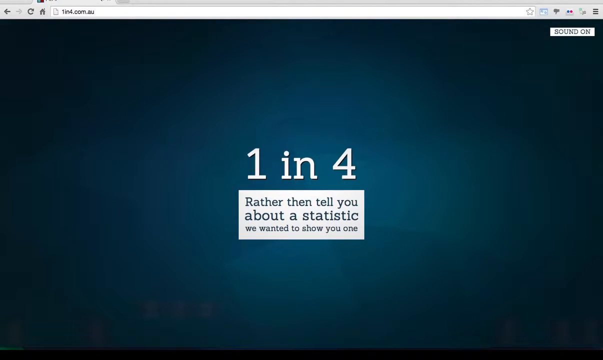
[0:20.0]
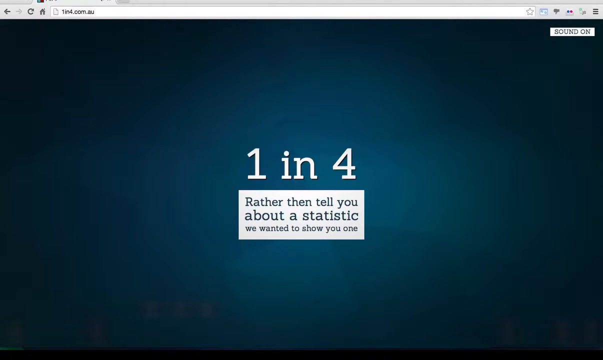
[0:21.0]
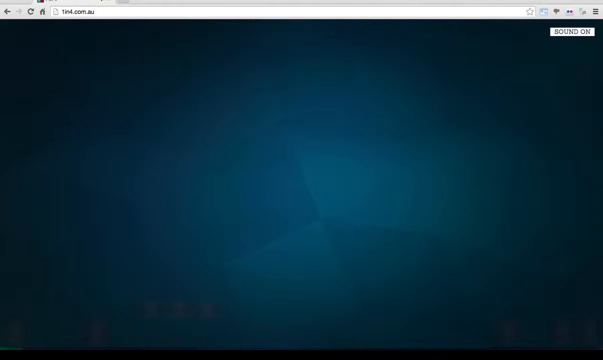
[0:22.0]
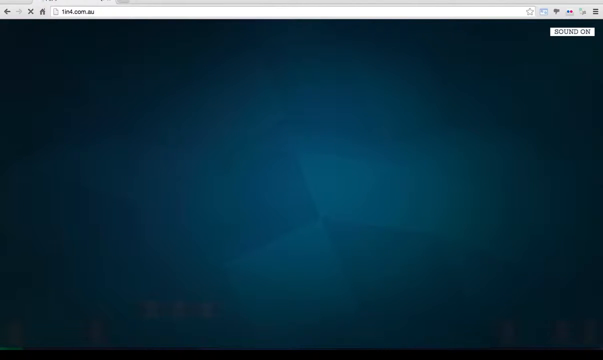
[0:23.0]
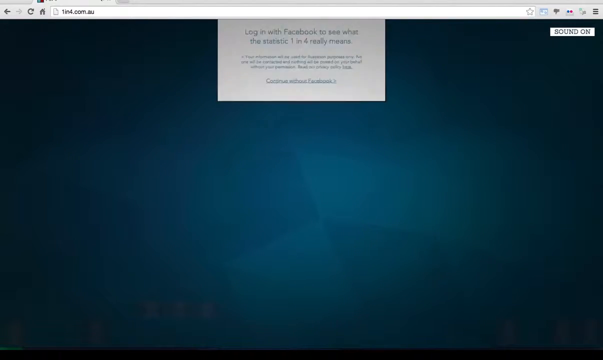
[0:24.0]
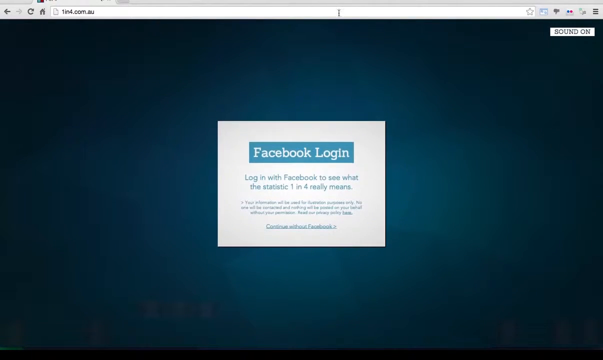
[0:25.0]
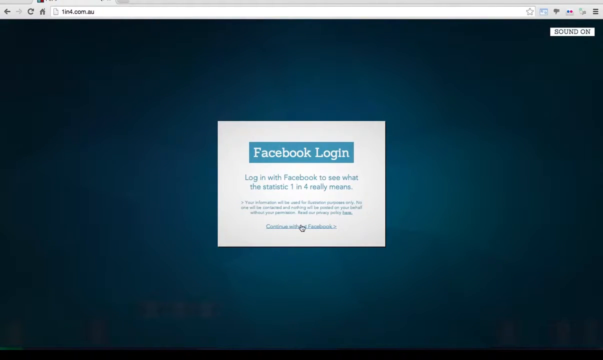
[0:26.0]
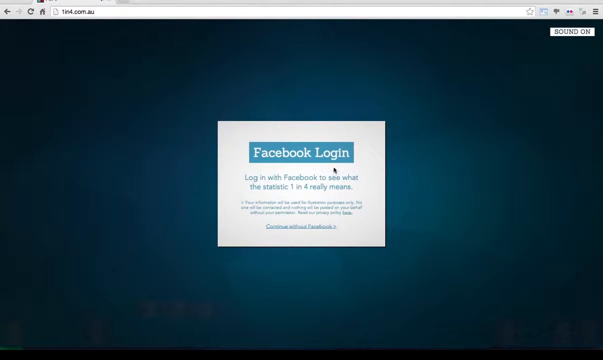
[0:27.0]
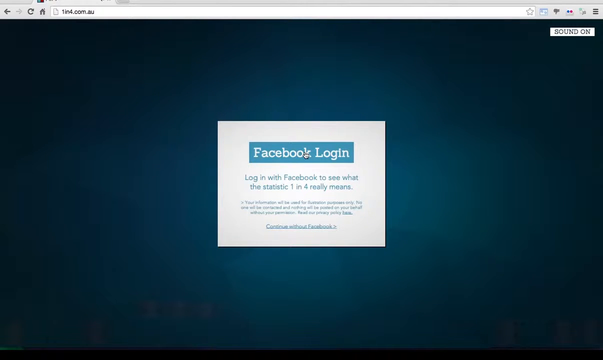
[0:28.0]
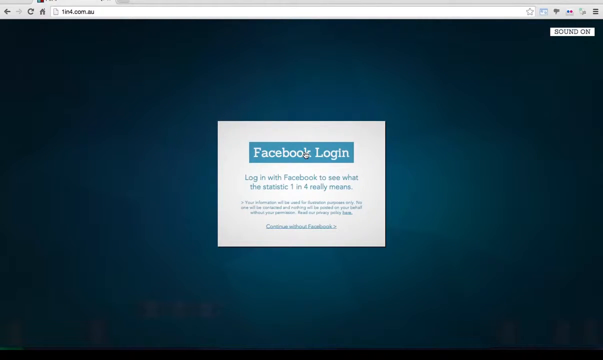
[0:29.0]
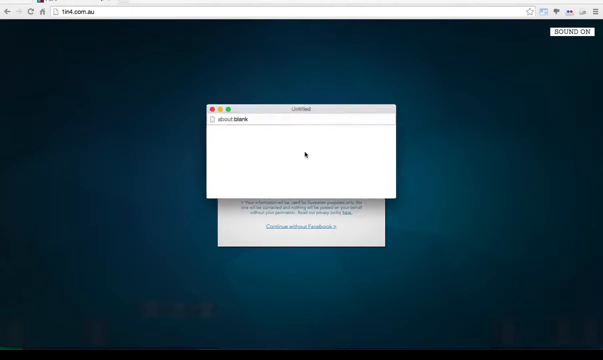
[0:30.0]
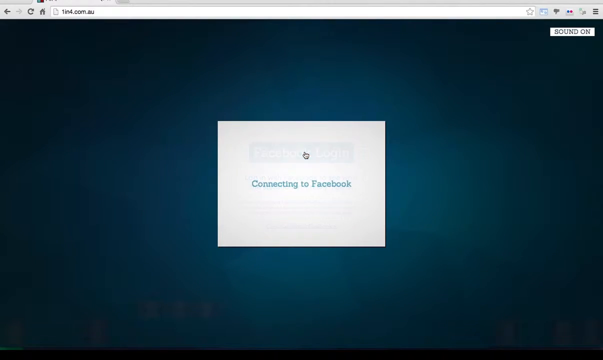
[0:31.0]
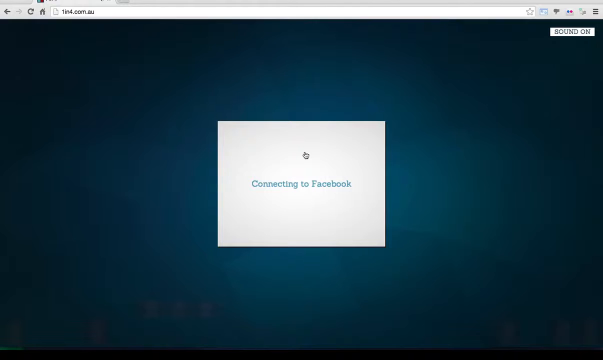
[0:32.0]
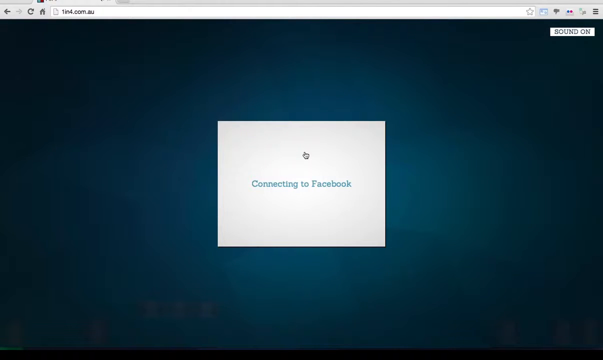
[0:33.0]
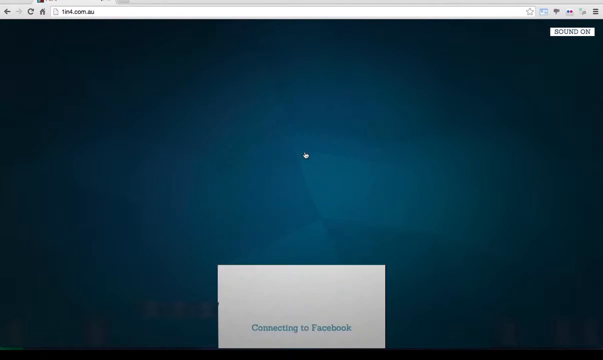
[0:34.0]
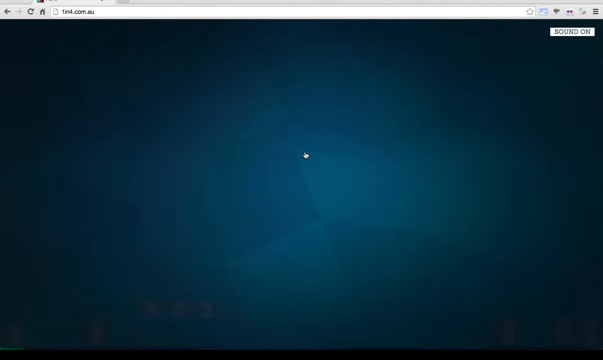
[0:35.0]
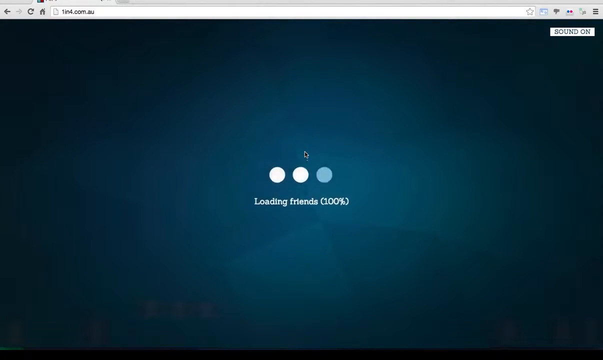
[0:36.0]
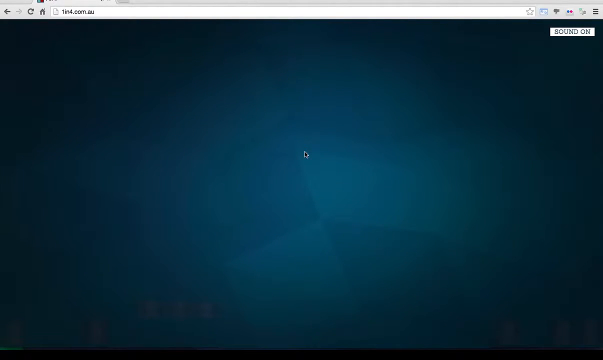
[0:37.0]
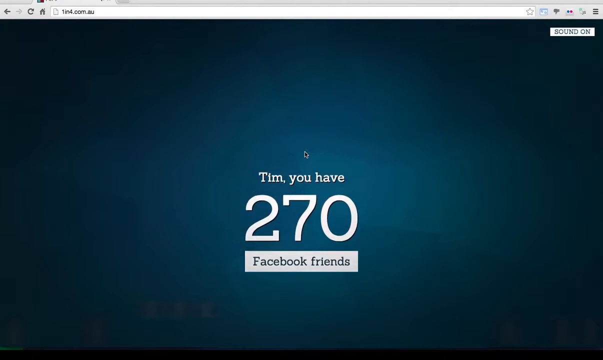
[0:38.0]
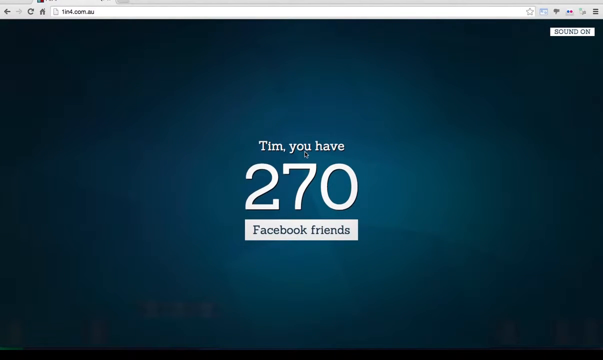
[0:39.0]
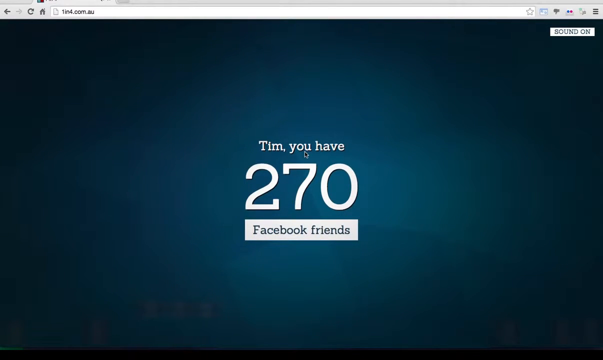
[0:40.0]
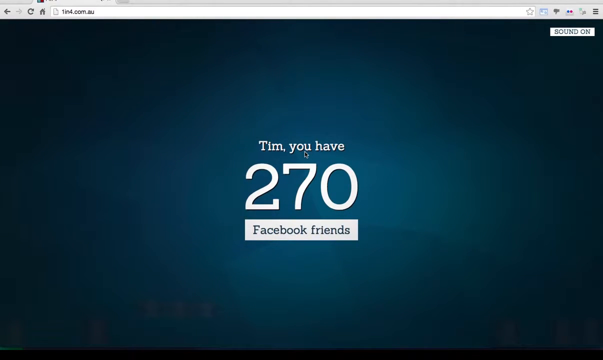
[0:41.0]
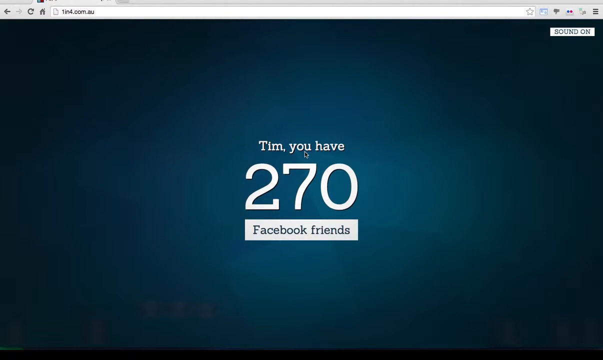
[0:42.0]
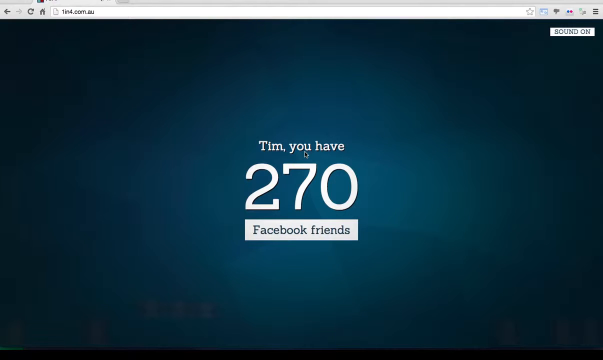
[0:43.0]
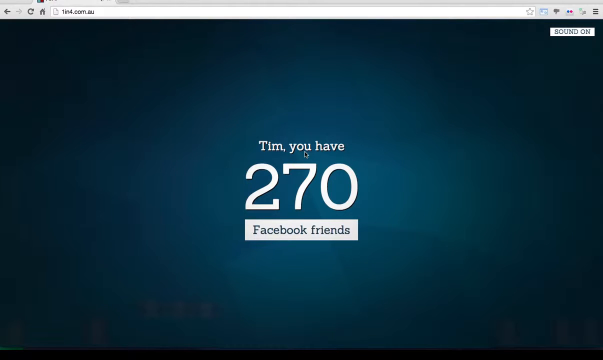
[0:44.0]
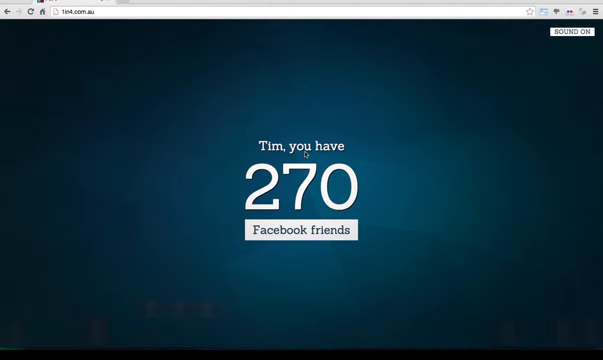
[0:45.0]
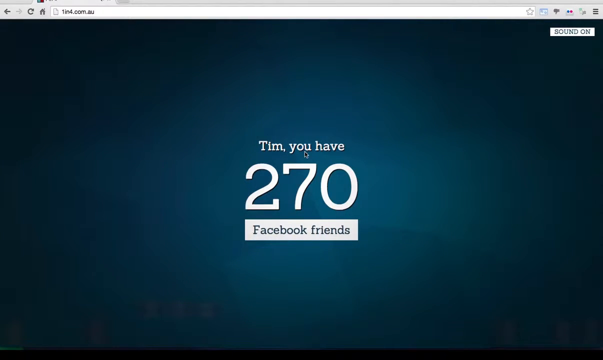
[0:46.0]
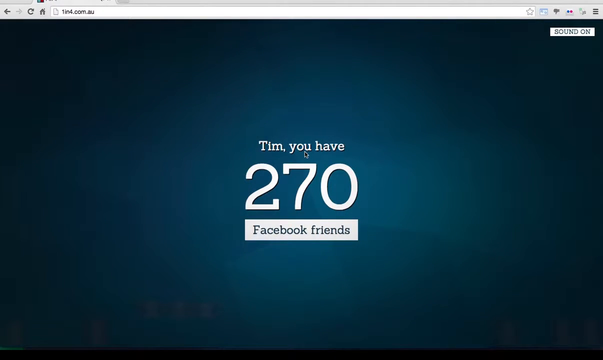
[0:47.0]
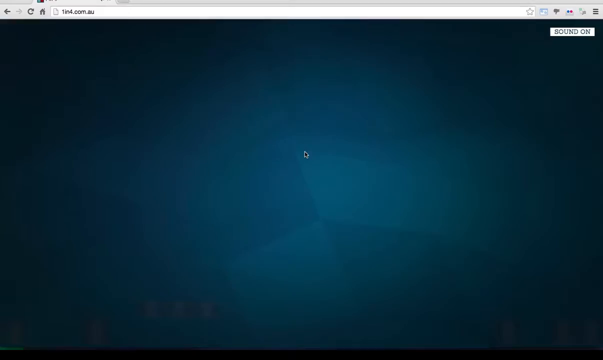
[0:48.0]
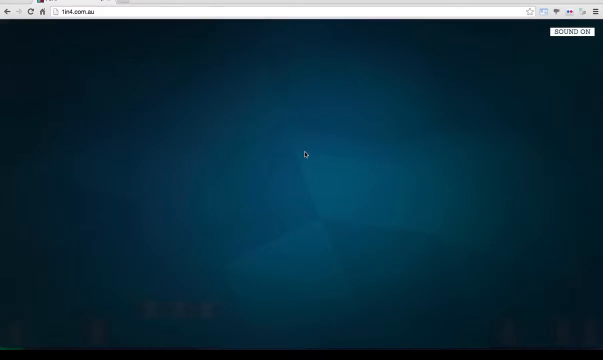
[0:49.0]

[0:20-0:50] A black background shows "one in four" in white letters, with a small white sub-background beneath it in black letters reading "rather than tell you about a statistic we wanted to show you one." This fades and apparently moves down, followed by "log in with Facebook to see what the statistic one in four really means." It then says it is connecting to Facebook, and a white panel flips down reading "loading friends." Next comes "Tim you have 270 Facebook friends," with "Facebook friends" in a white sub-background and the rest of the lettering in white. The screen then scrolls down through a bunch of different pictures, probably this person's friends. For most of the section there is a black background with writing on it as Tim logs into Facebook.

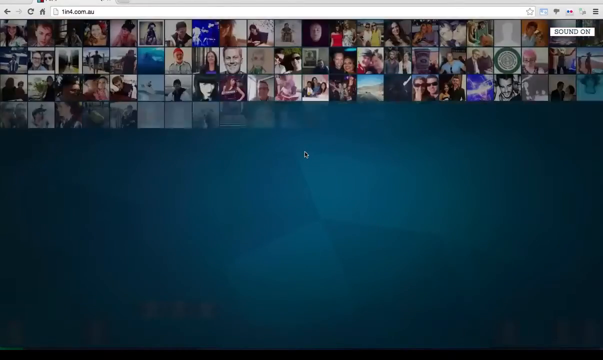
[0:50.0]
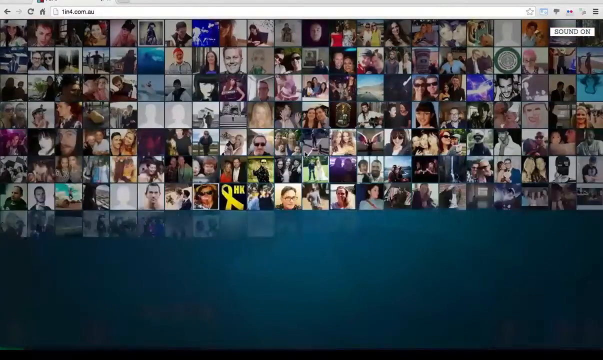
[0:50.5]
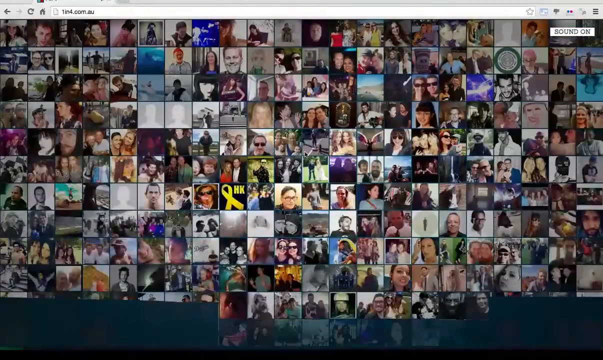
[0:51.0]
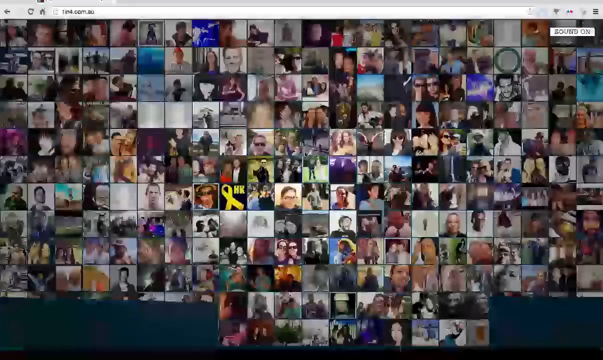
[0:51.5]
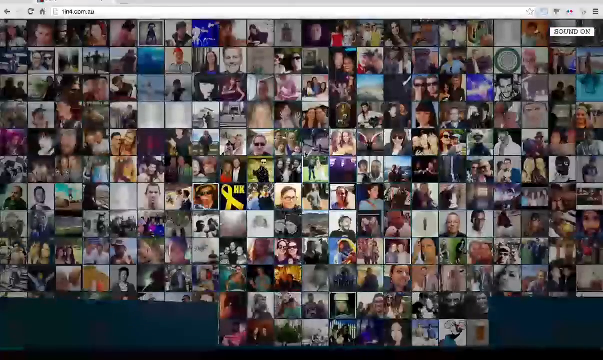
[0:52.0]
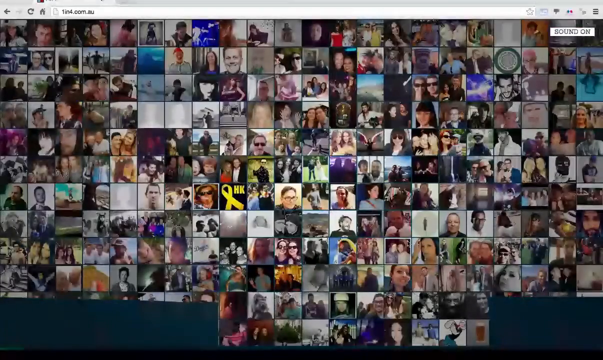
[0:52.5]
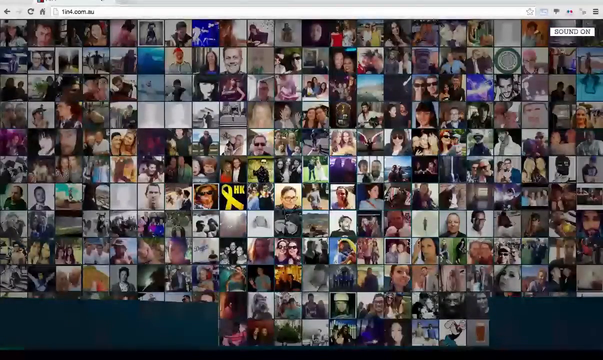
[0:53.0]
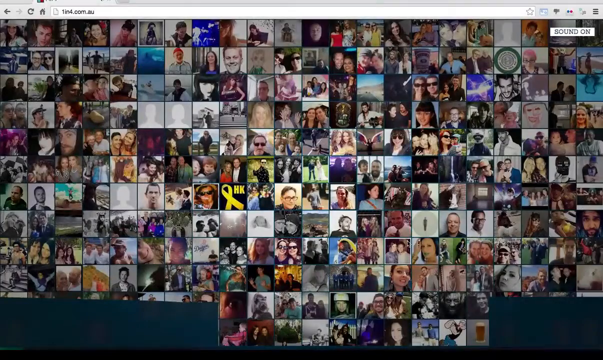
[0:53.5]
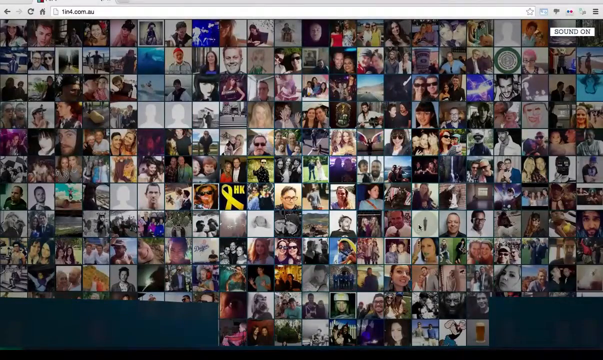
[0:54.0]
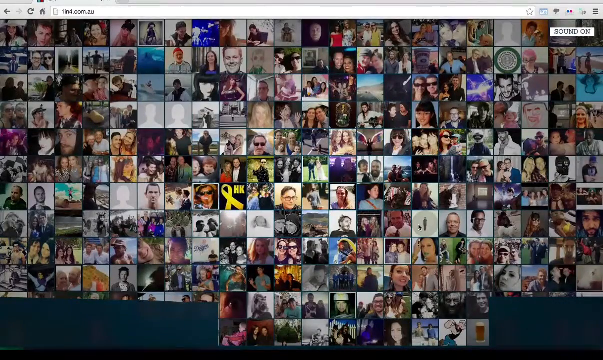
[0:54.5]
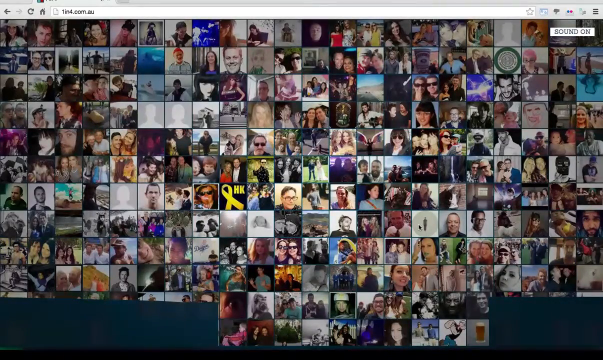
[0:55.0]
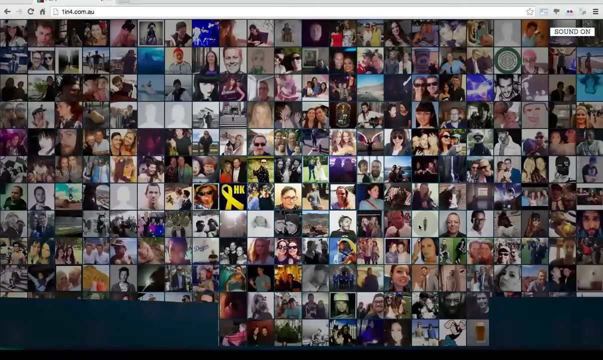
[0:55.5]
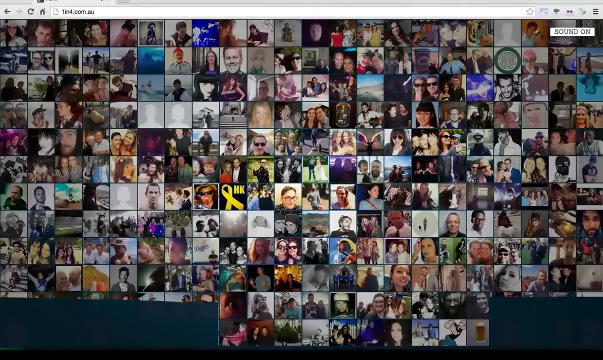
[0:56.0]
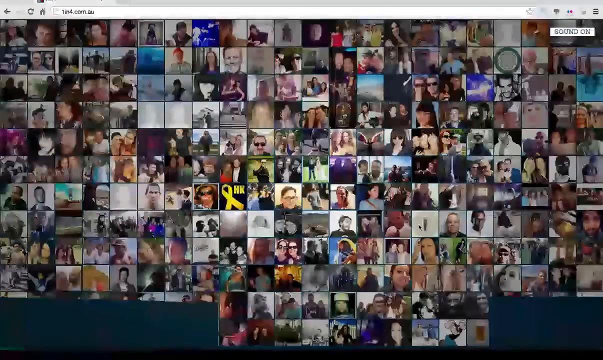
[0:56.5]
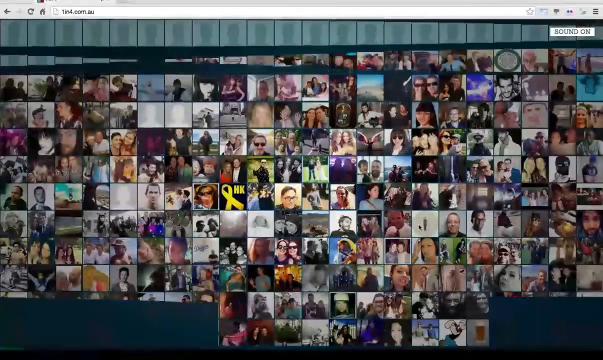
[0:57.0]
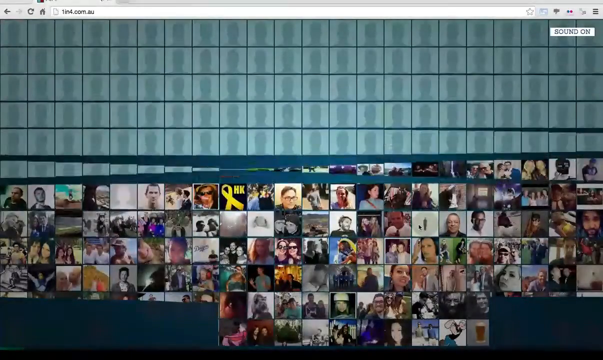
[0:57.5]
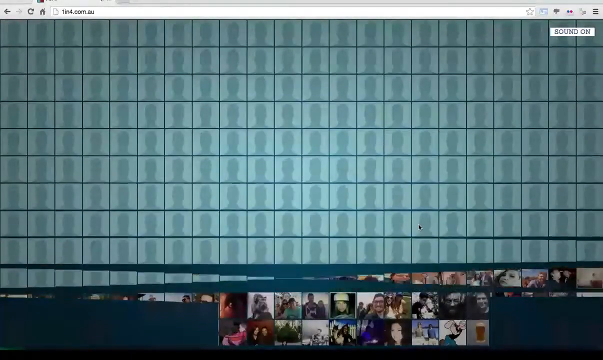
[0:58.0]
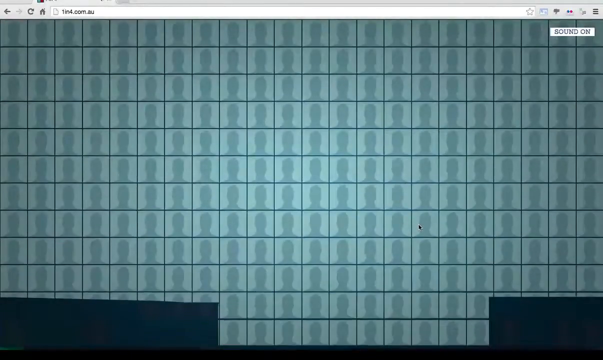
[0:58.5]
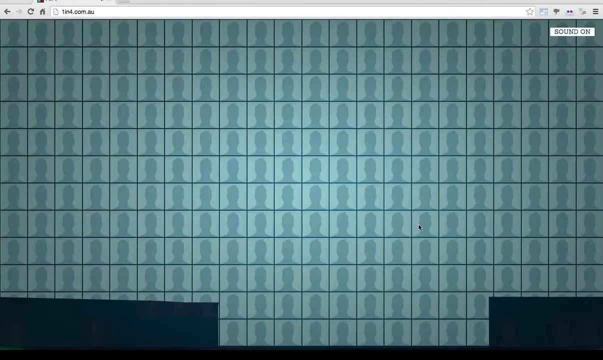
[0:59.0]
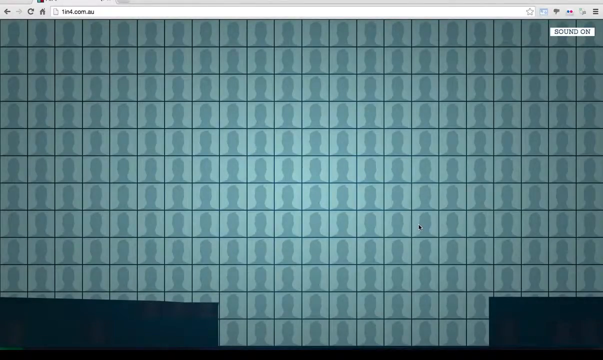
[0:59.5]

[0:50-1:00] A montage of people, probably Tim's friends, scrolls as small pictures arranged left to right, then top to bottom. Each picture is then replaced, one line at a time, with an anonymous silhouette: a light gray background with a dark gray male or female silhouette. The pictures scroll line by line, as does the replacement with silhouettes. The background here is dark, with some lighter blurry blue, maybe greenish-blue.